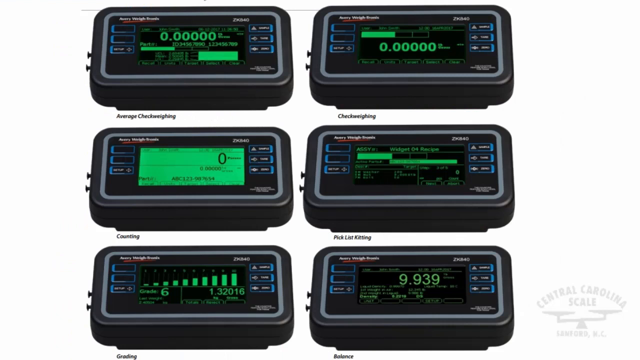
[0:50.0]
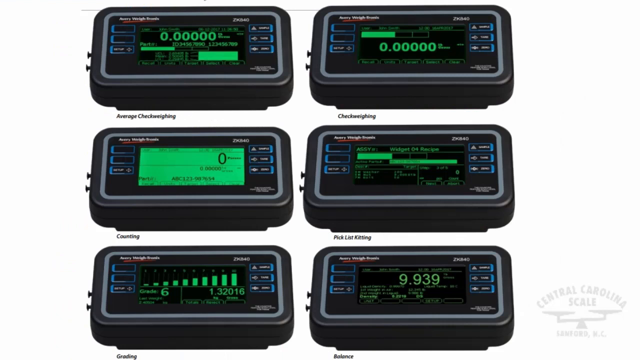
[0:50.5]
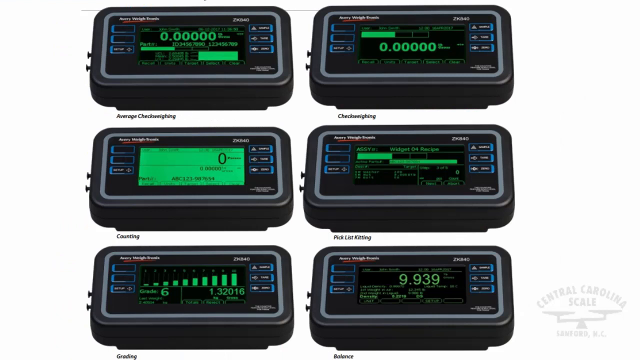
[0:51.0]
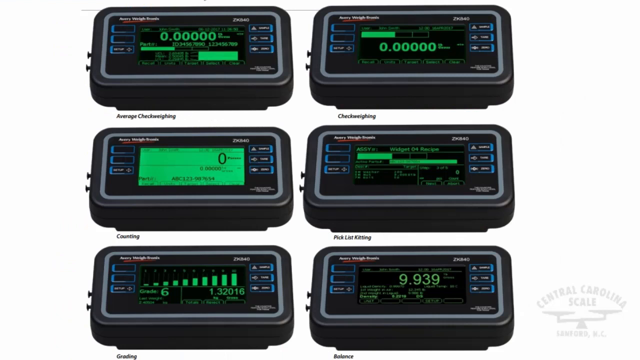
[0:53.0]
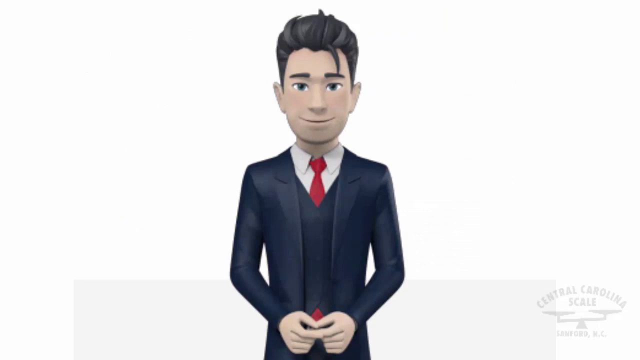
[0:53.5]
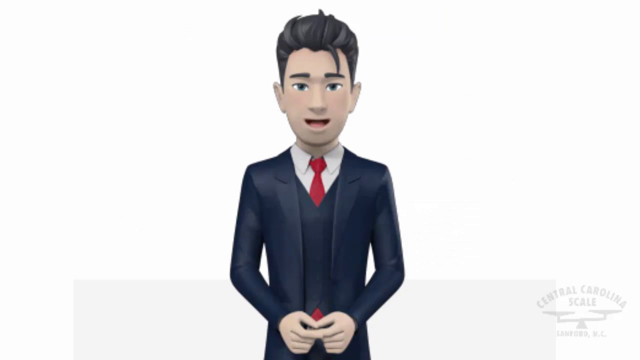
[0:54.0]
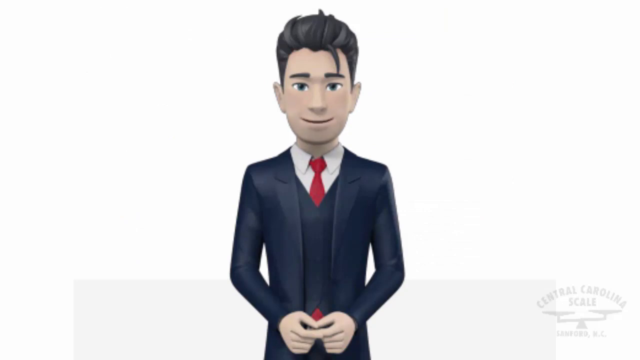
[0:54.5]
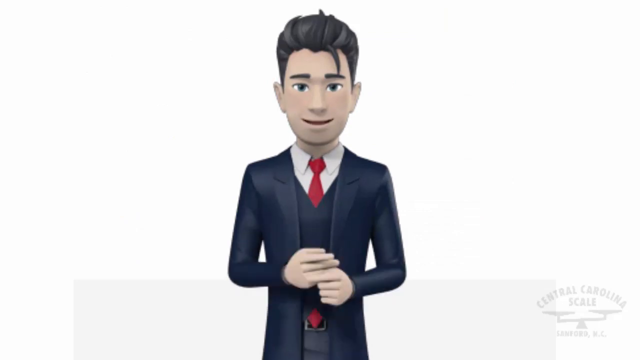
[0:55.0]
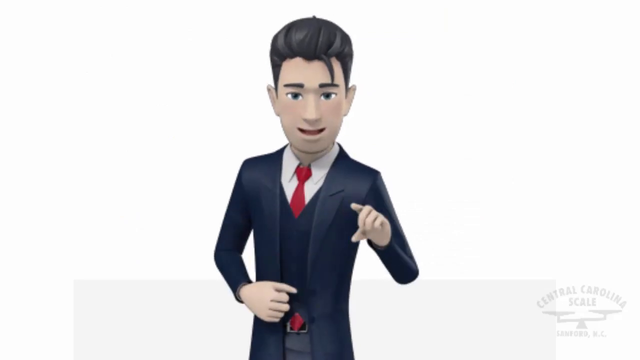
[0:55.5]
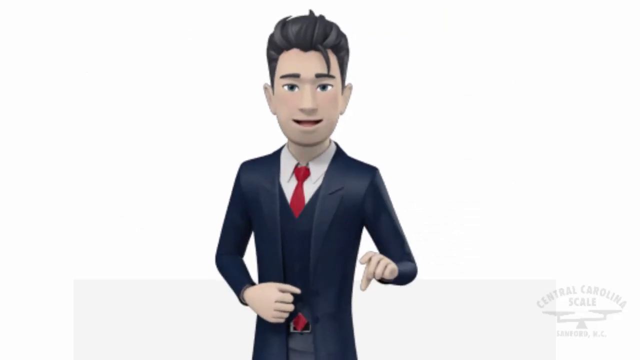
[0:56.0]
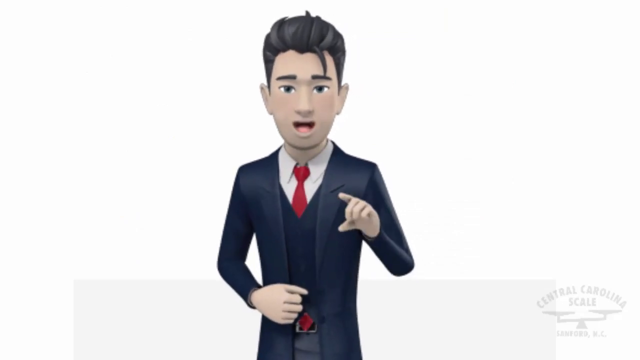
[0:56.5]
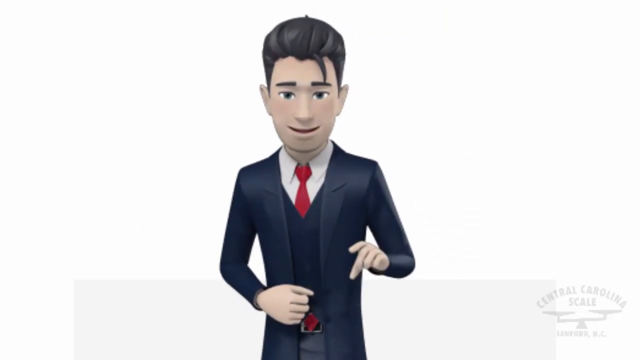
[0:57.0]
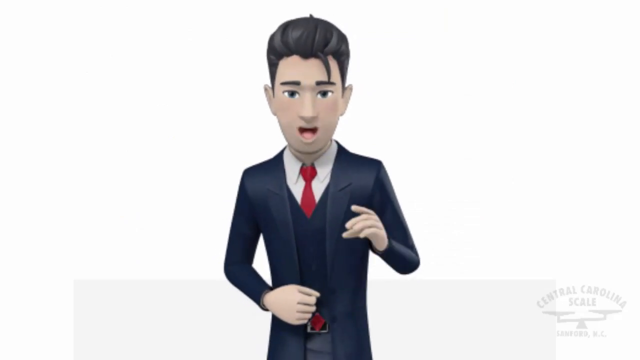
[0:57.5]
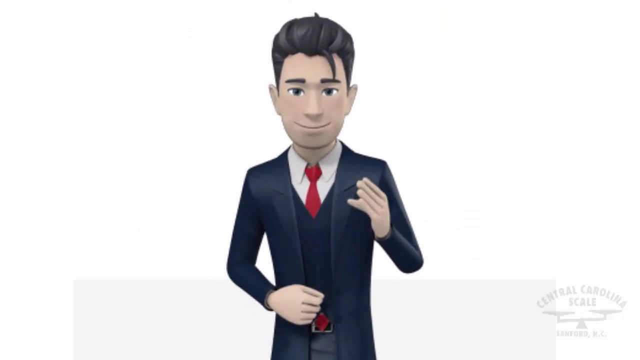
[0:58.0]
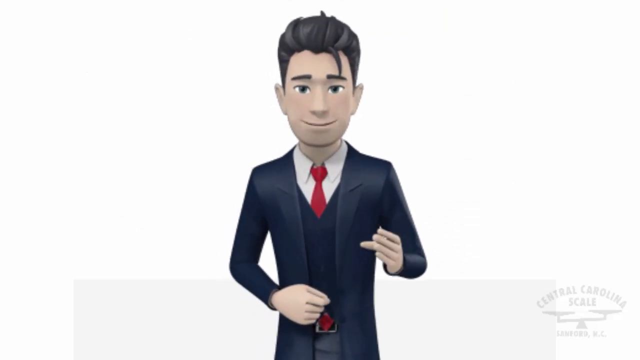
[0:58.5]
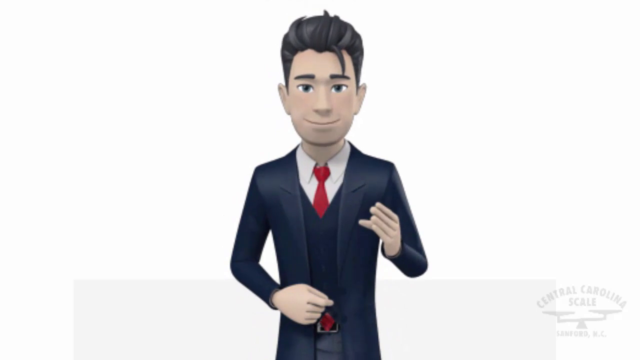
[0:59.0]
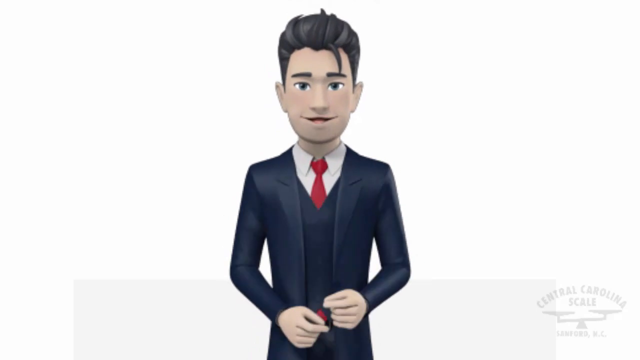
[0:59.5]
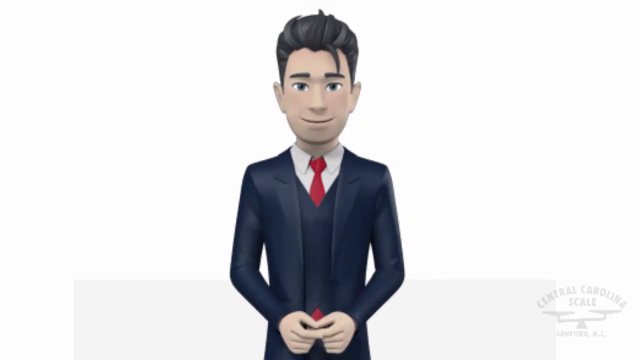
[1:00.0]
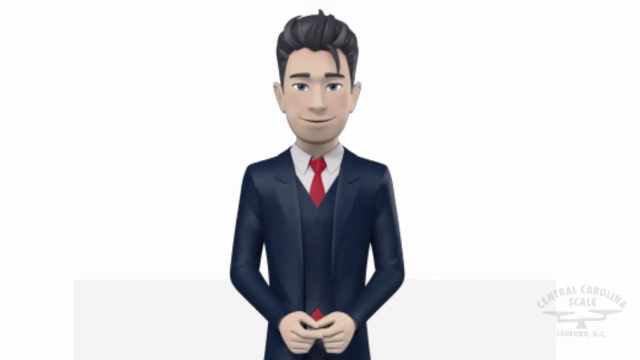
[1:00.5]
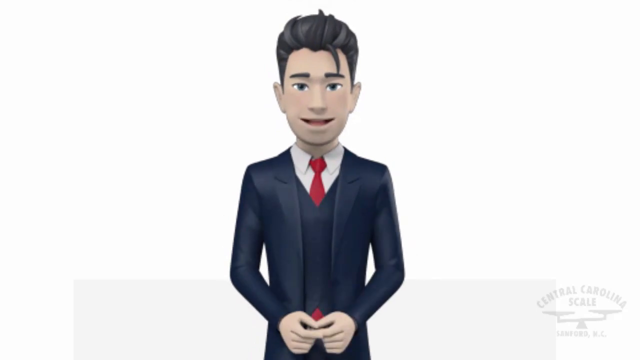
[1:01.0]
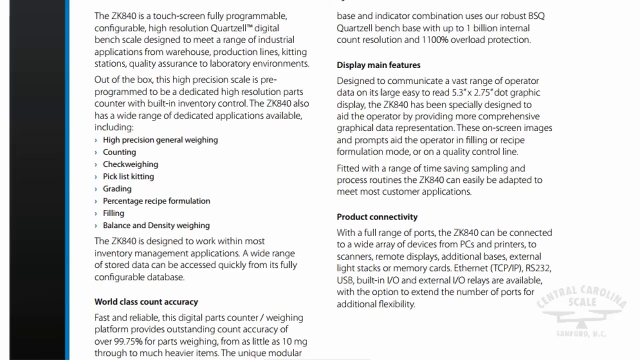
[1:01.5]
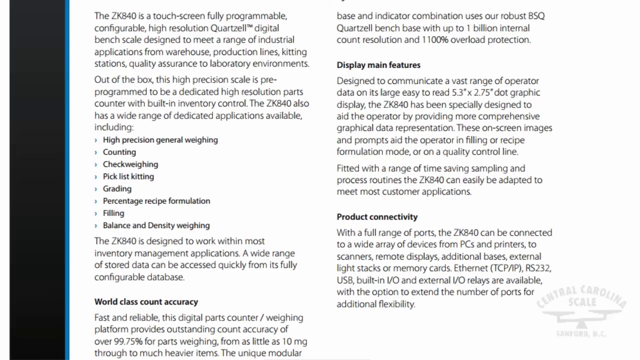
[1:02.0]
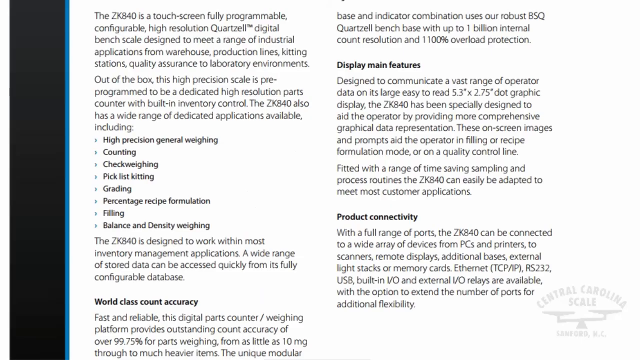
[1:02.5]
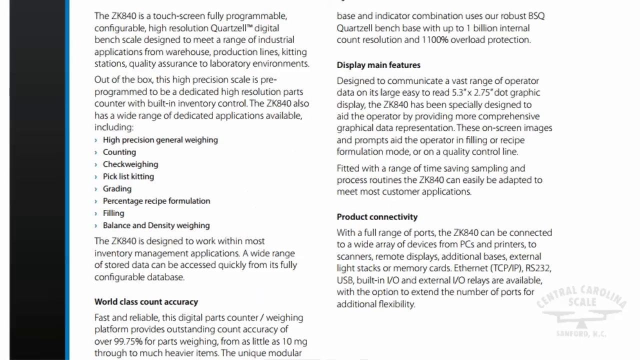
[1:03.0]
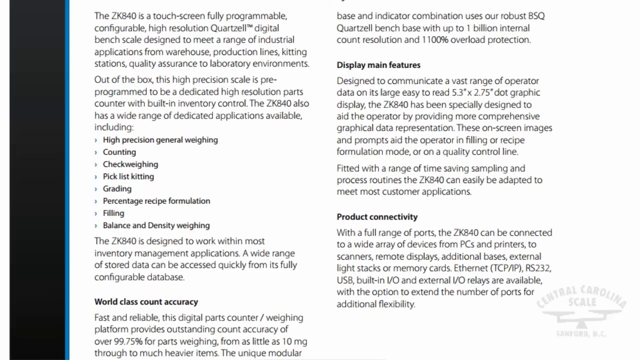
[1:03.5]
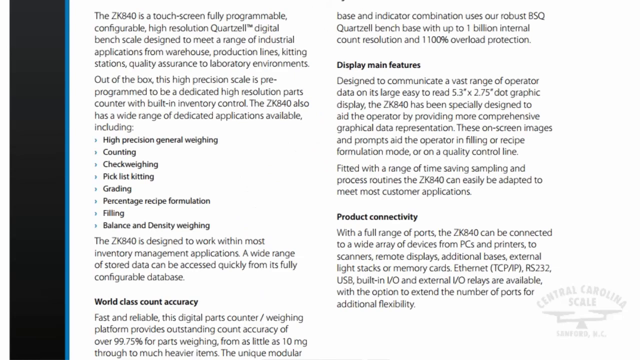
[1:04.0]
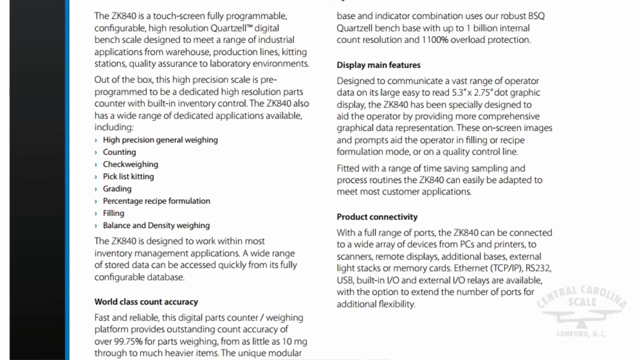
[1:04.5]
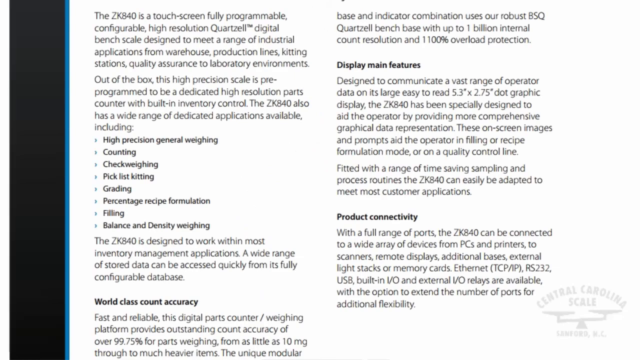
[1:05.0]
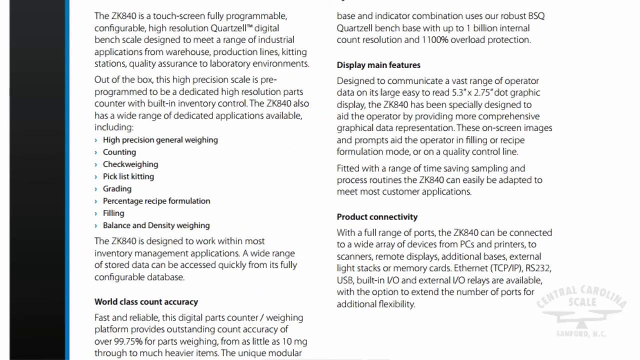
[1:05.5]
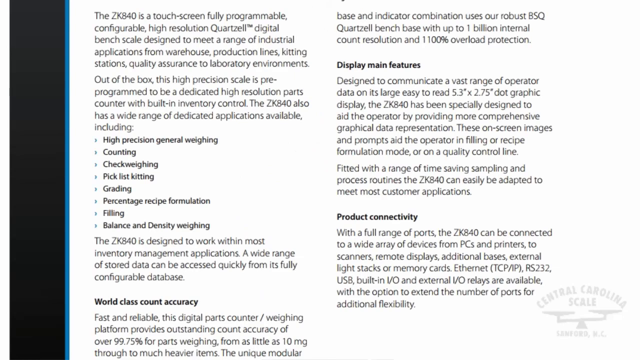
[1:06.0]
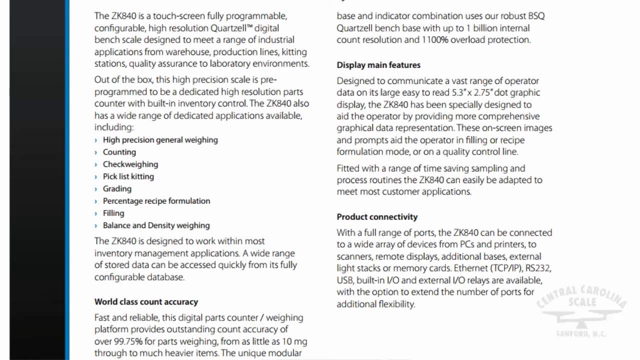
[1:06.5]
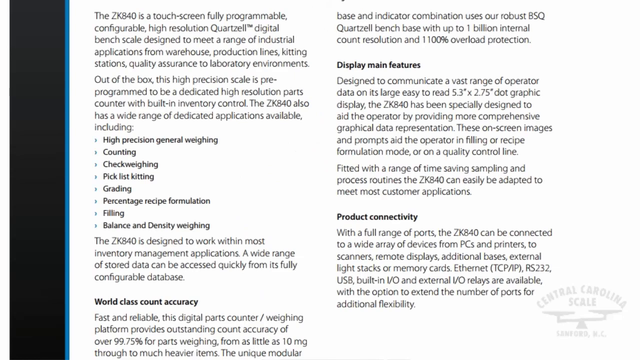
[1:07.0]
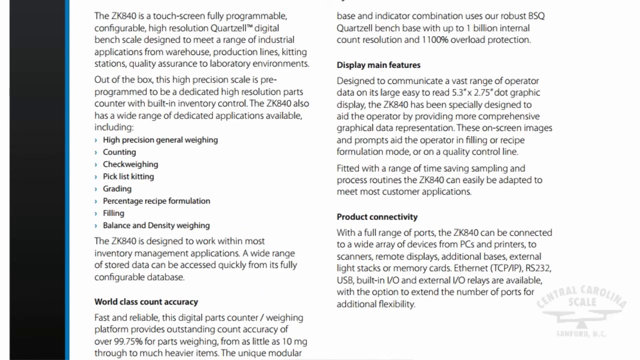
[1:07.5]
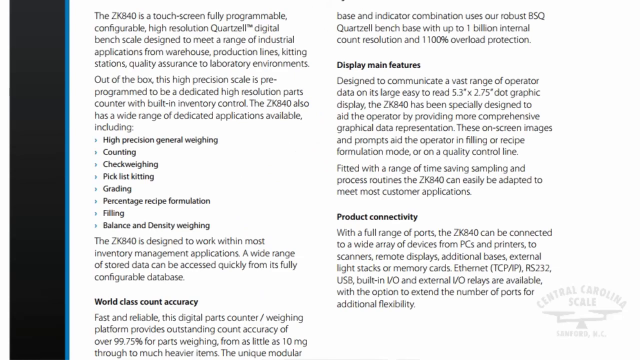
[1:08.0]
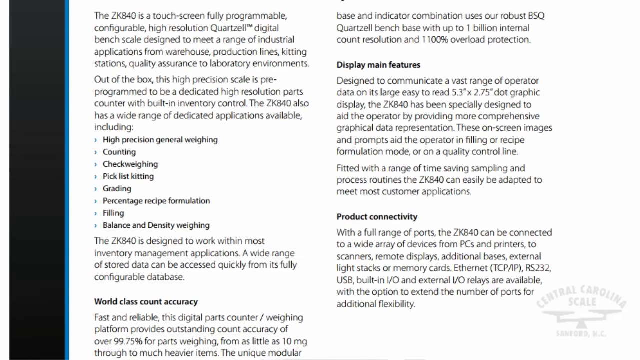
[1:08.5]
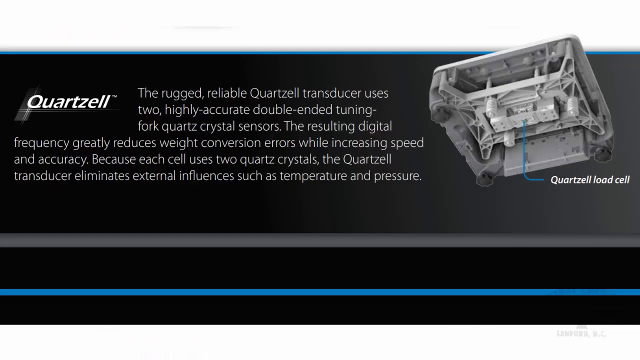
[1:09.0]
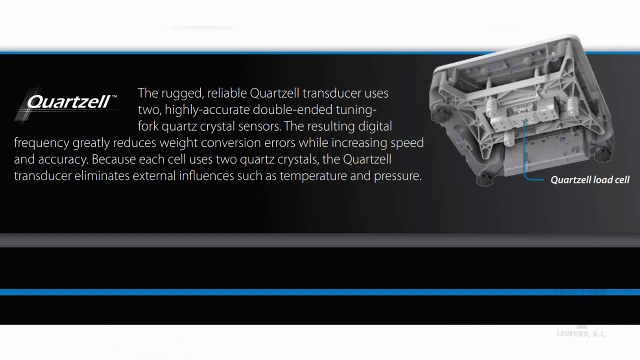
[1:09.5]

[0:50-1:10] Six monitor displays are on the screen, each with numbers in green and other various information. A man with dark hair is then shown speaking. He wears a black suit, a red tie and a white shirt underneath. He continues to speak, pointing with his finger and moving his hand around. The video then goes to a webpage with some different features, about a touch screen digital bench scale. The page shows different categories, such as how to display main features and product connectivity, all in black text on a white background. It then briefly shows a product different from those seen before, some type of load cell, with some text beside it on the left.